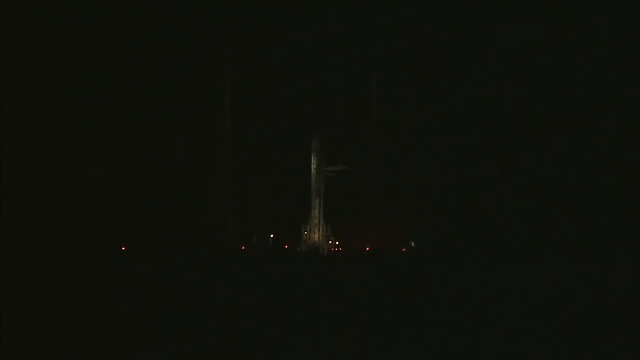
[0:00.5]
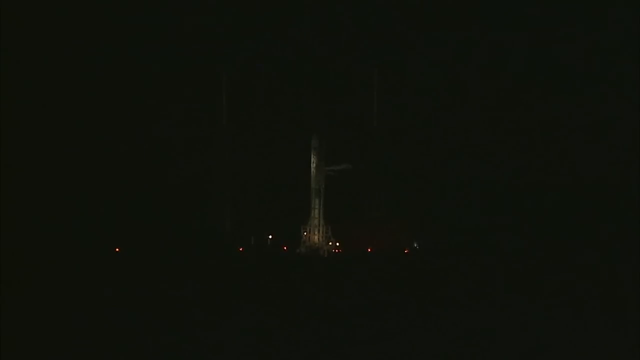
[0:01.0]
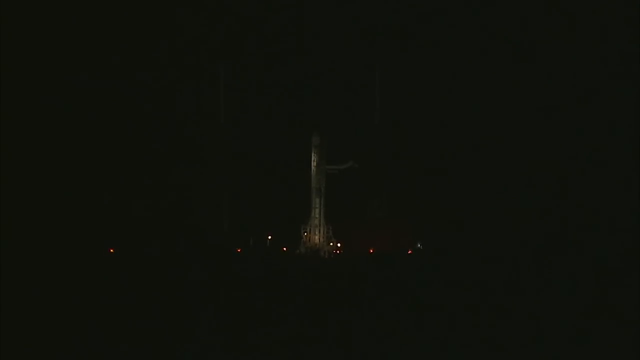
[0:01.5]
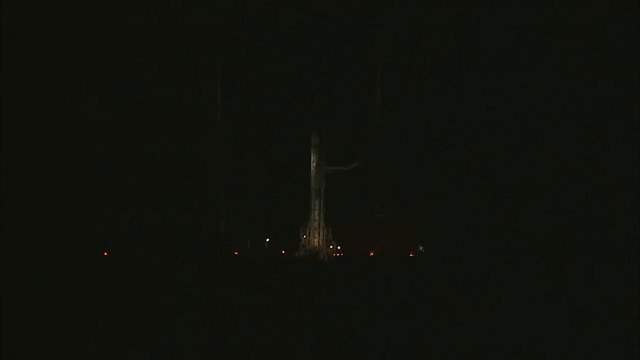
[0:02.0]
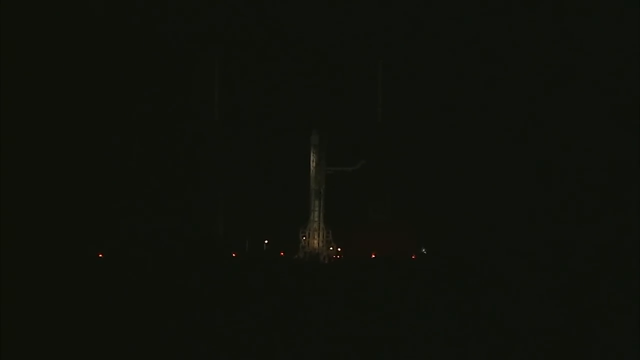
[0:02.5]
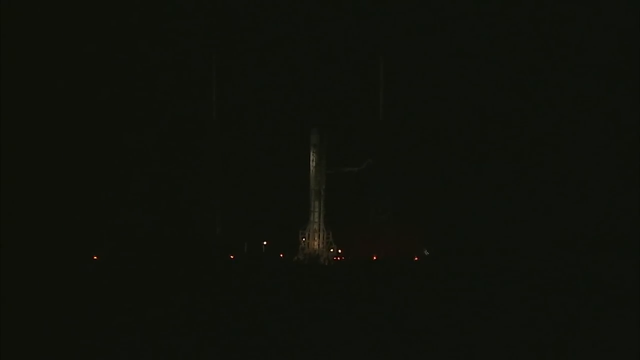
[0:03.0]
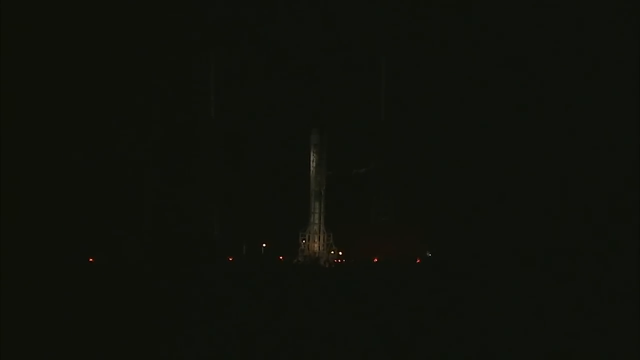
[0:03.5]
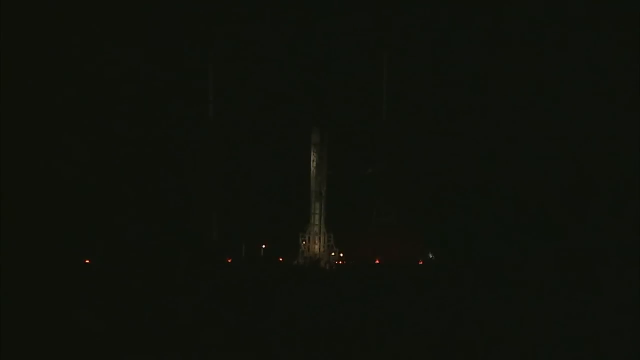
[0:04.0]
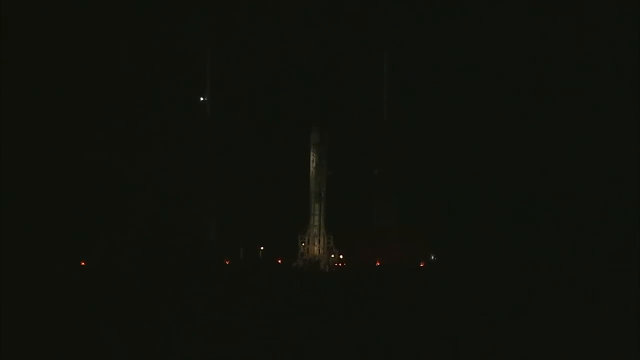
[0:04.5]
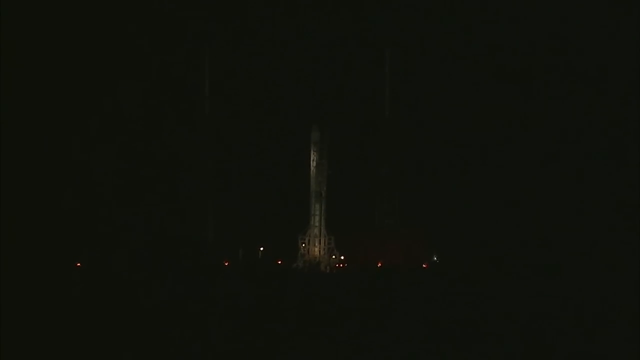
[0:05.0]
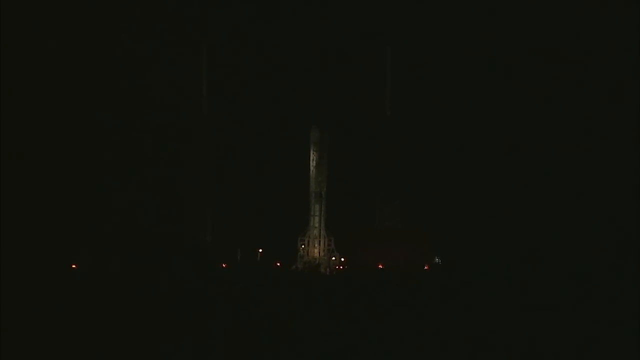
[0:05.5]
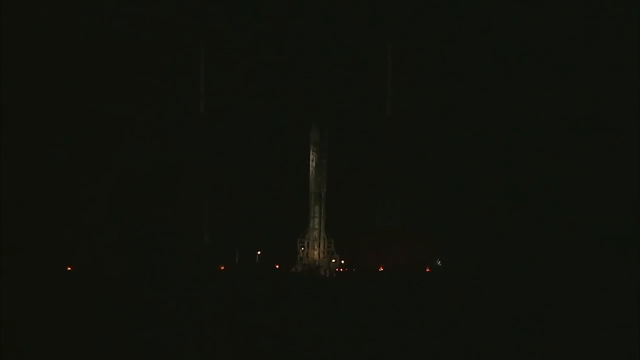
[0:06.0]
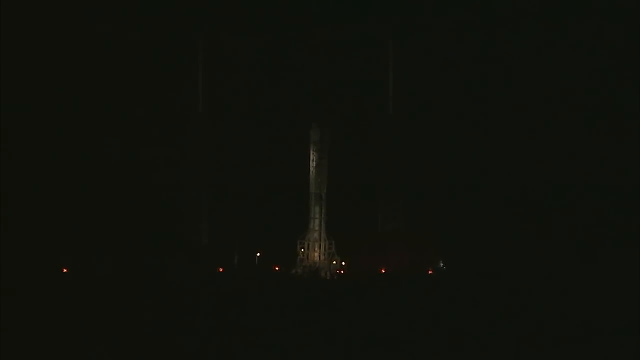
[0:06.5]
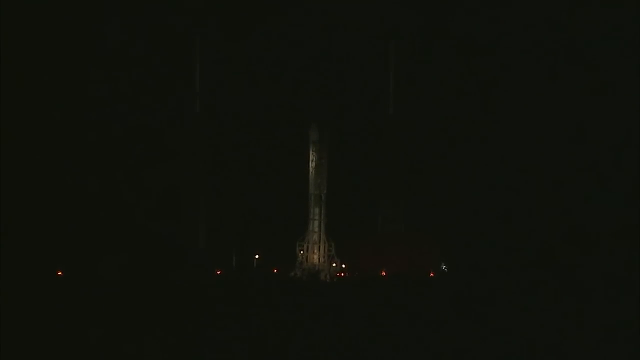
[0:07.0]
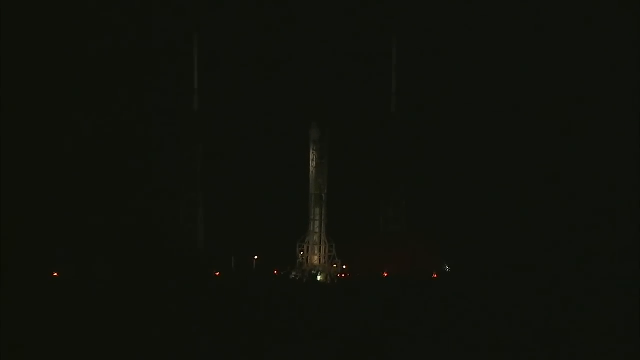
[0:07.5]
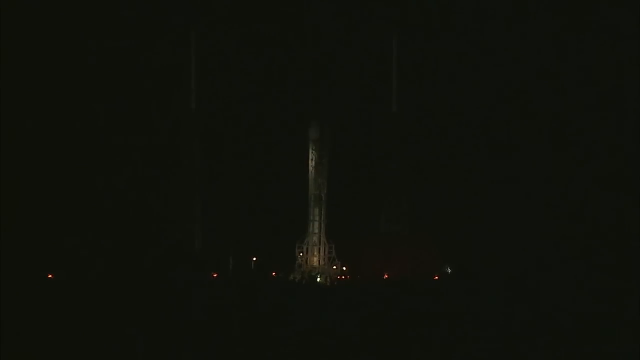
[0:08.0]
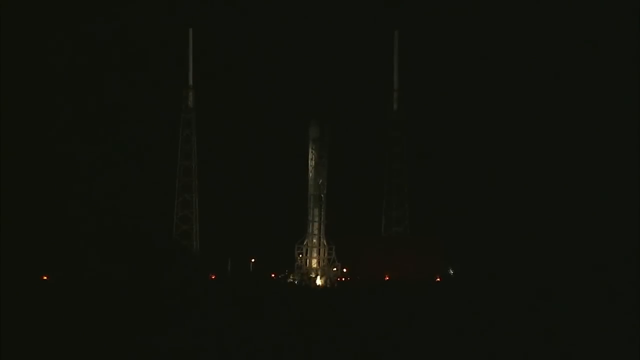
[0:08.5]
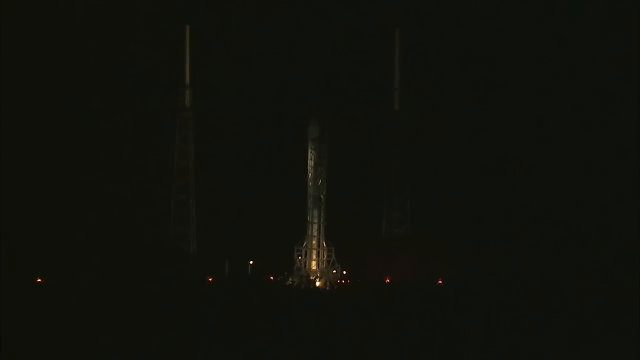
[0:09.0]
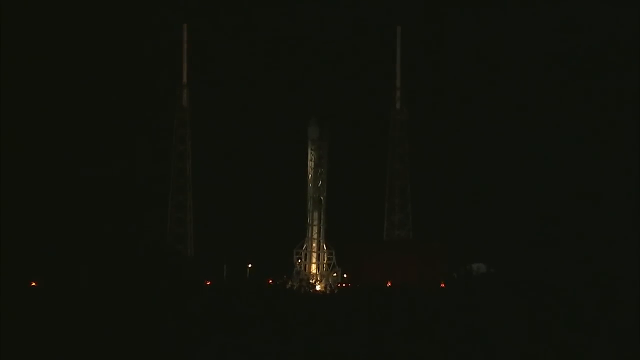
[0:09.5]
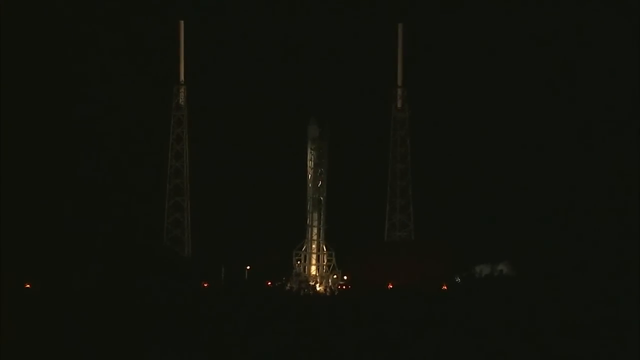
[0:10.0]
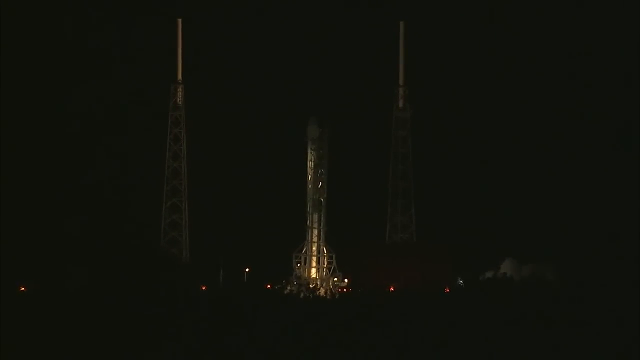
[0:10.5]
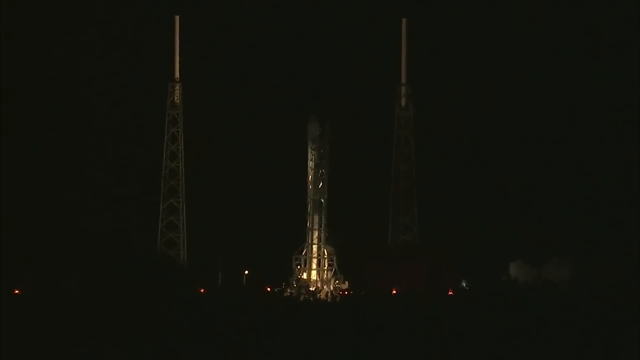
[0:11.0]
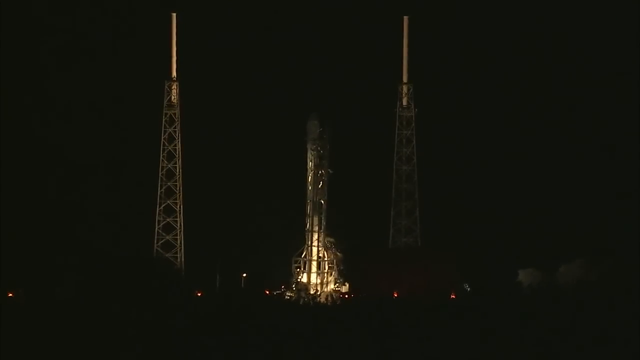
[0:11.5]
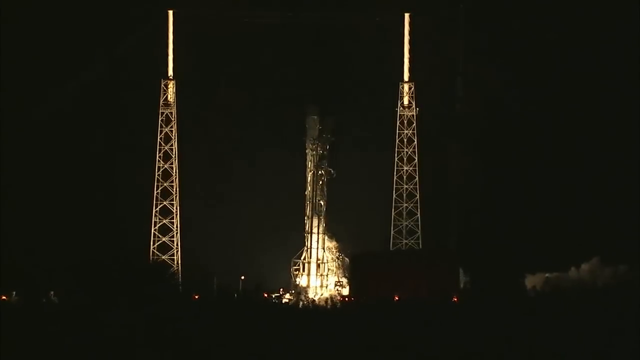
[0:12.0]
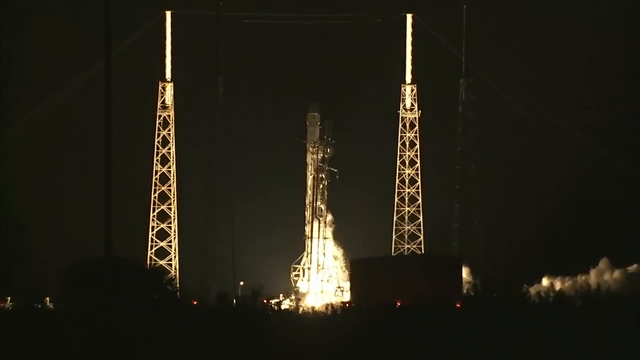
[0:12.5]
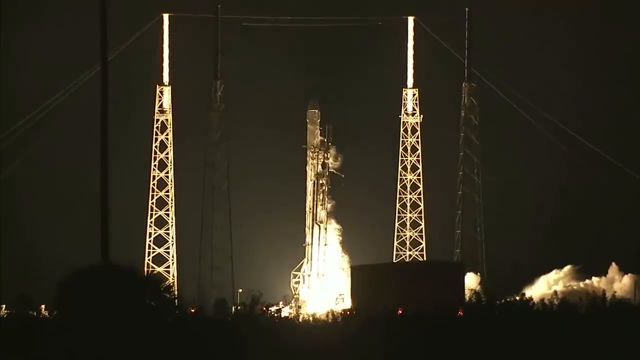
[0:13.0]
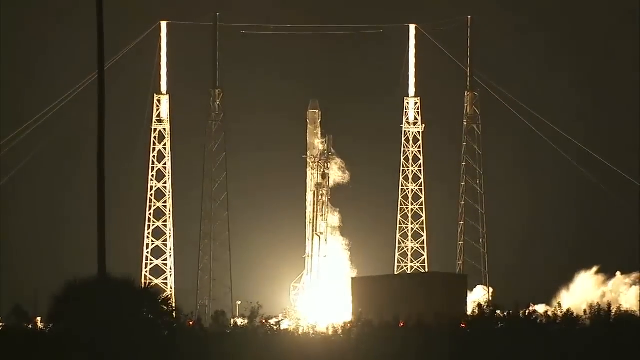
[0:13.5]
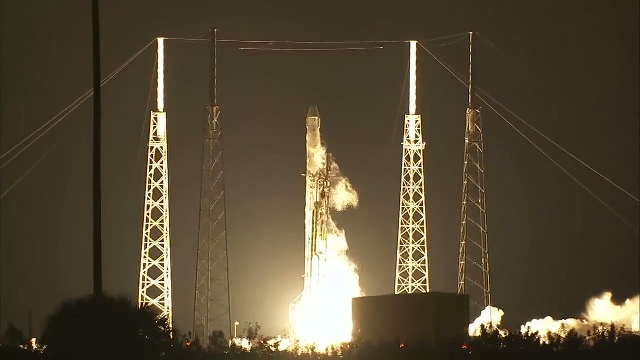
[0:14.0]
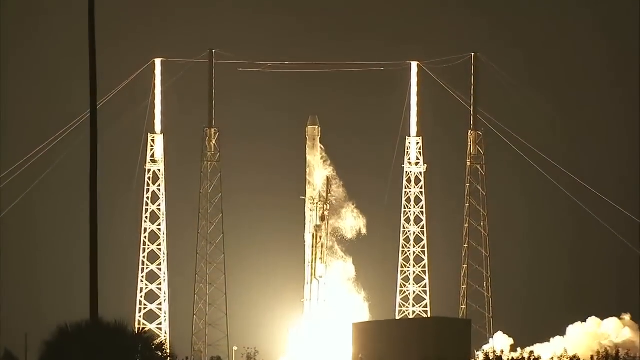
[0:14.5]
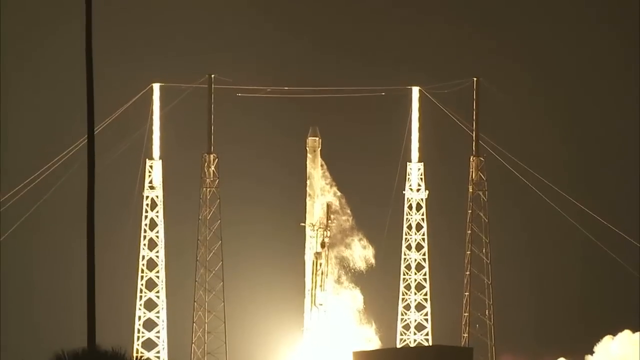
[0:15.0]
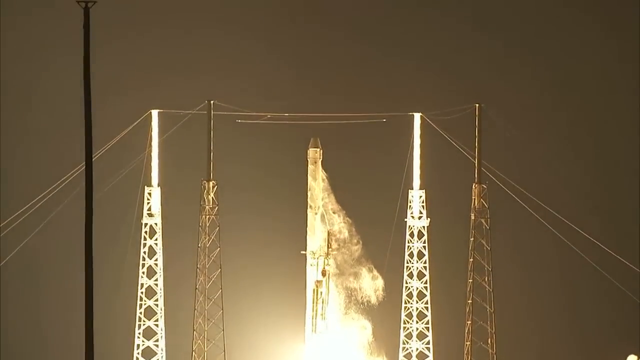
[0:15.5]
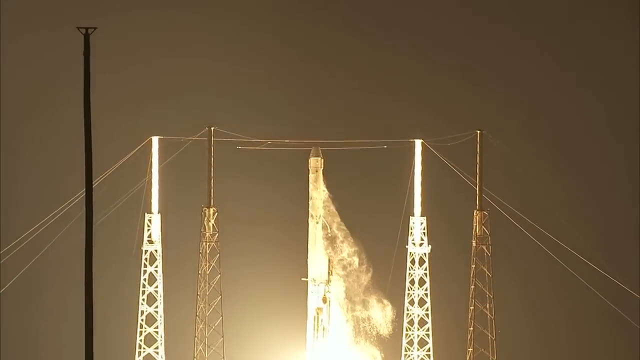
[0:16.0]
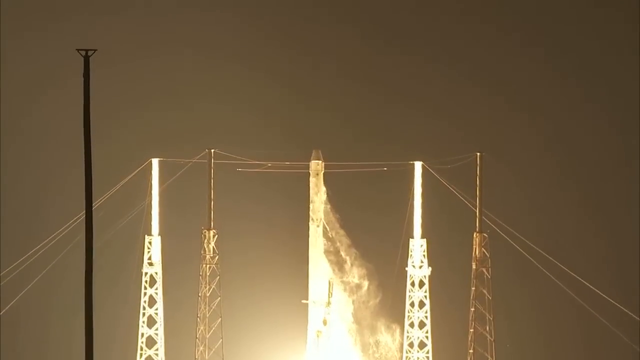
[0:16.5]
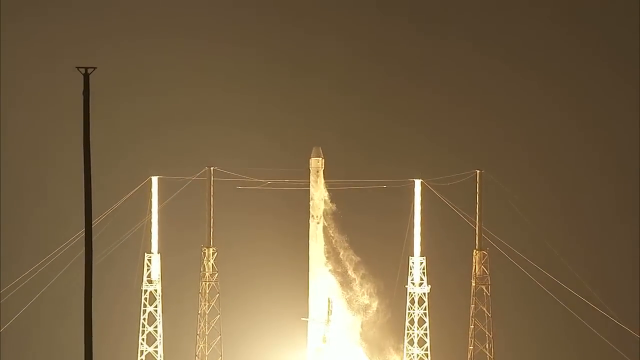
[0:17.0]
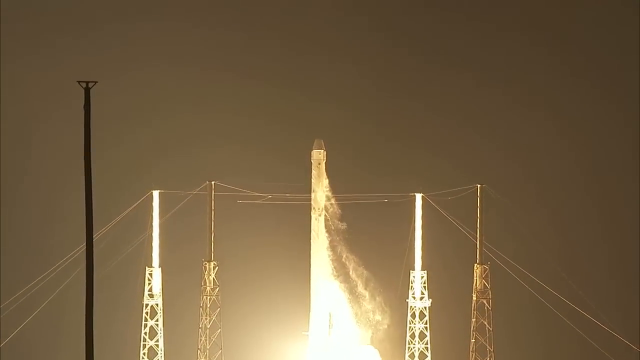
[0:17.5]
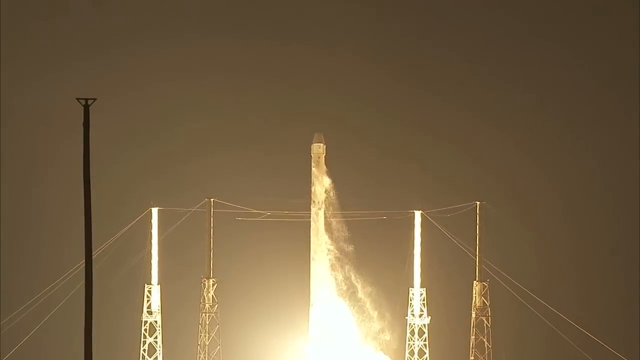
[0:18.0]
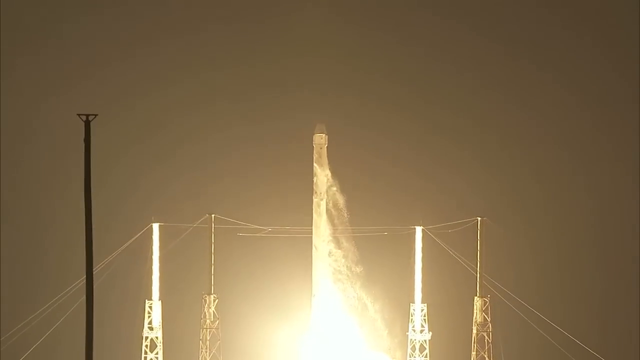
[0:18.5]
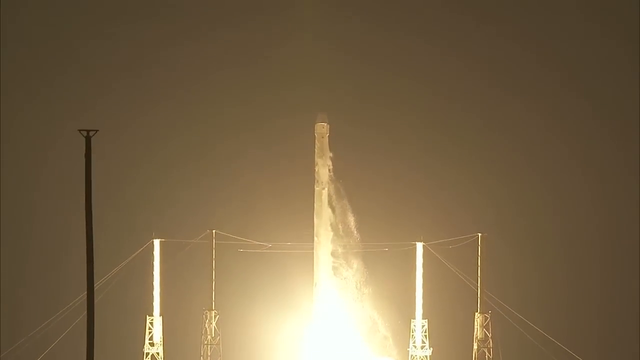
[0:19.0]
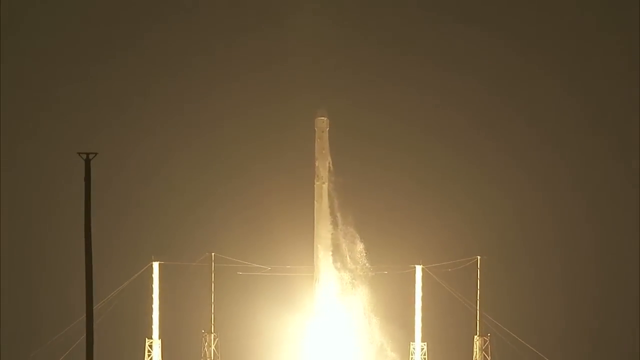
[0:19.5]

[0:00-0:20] The video starts off very dark, and it is hard to see what is in it. It appears to be a rocket, probably a space shuttle or some sort of spacecraft, being launched into the air; it looks like a very long white ship. It starts to rise slowly, with an explosion at the very bottom of it that accelerates it upward. Smoke comes off of it as it launches straight up, with the smoke flaring off all around it into the night sky. There are structures around with some wires attached; it is unclear whether they are part of a city in the background or specific to the launch site or the rocket.